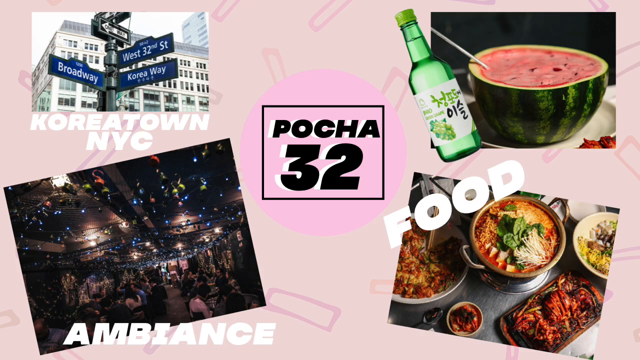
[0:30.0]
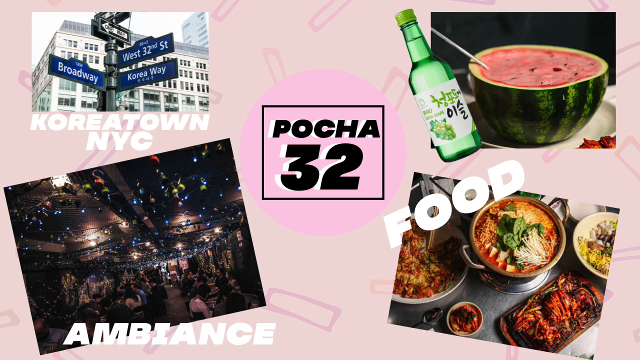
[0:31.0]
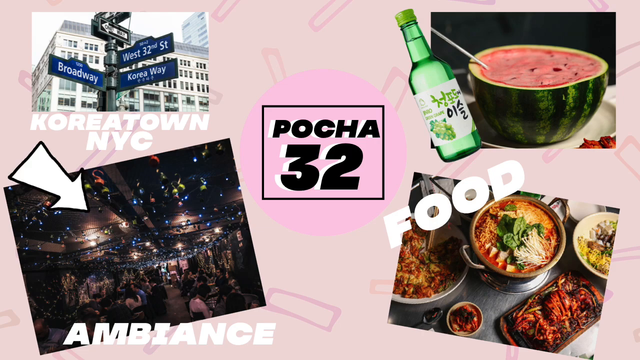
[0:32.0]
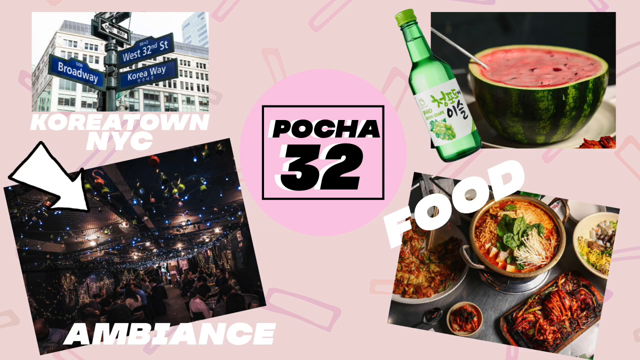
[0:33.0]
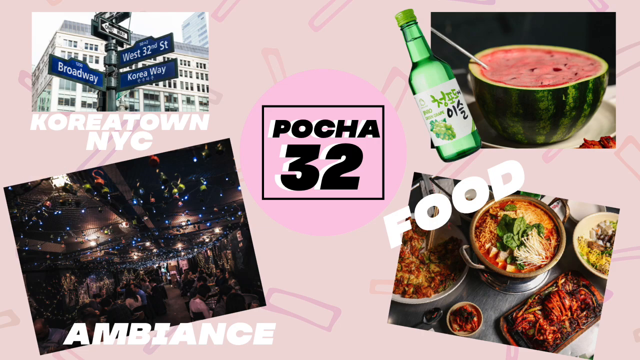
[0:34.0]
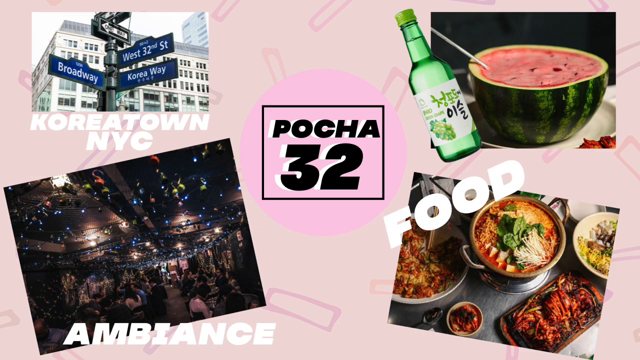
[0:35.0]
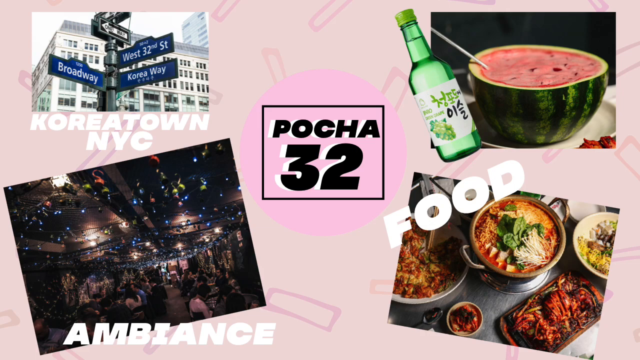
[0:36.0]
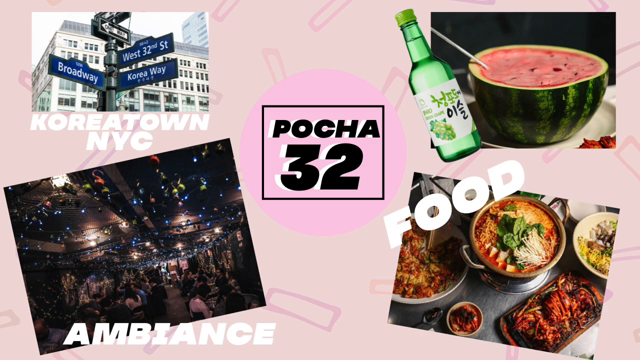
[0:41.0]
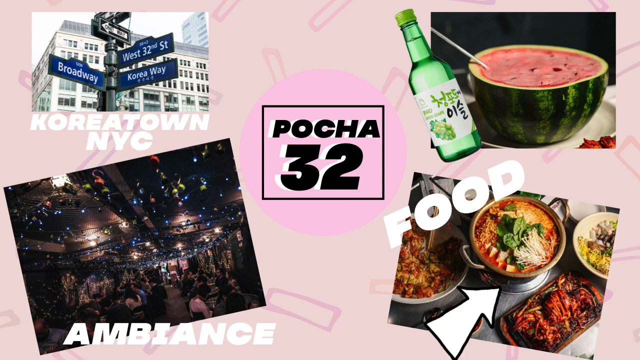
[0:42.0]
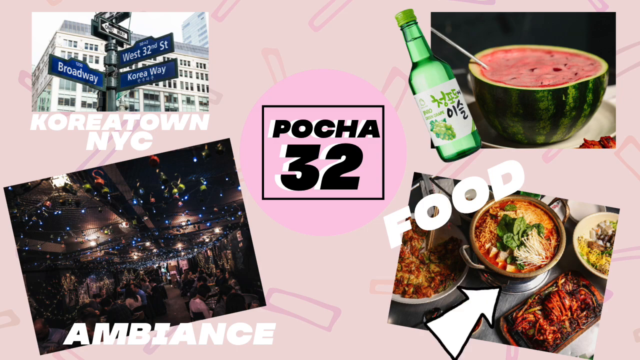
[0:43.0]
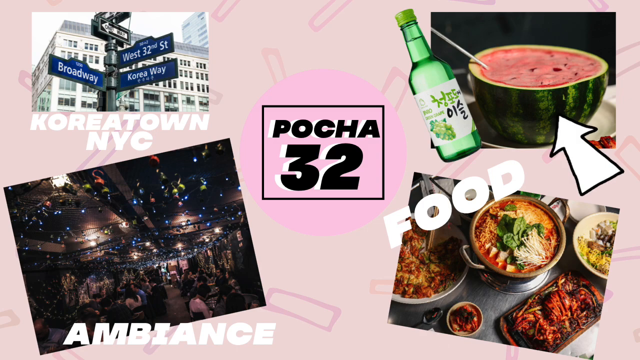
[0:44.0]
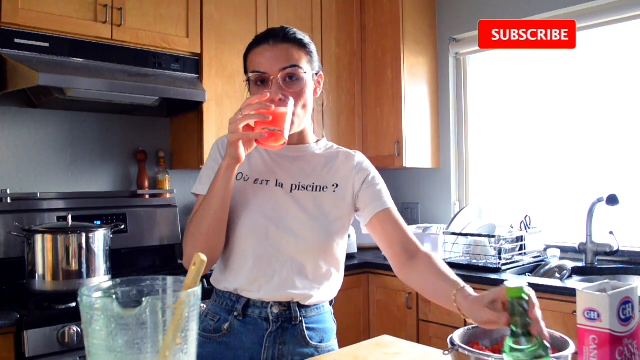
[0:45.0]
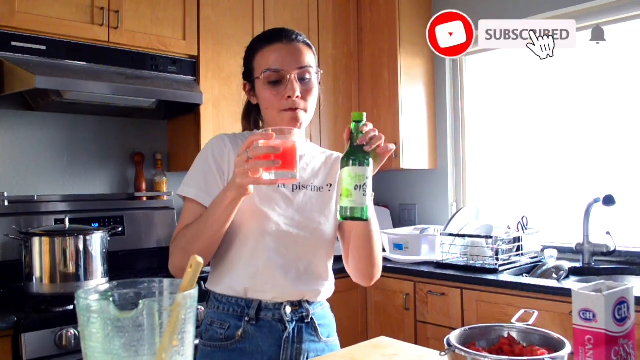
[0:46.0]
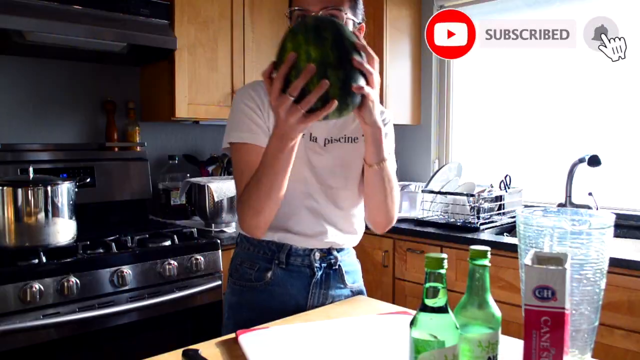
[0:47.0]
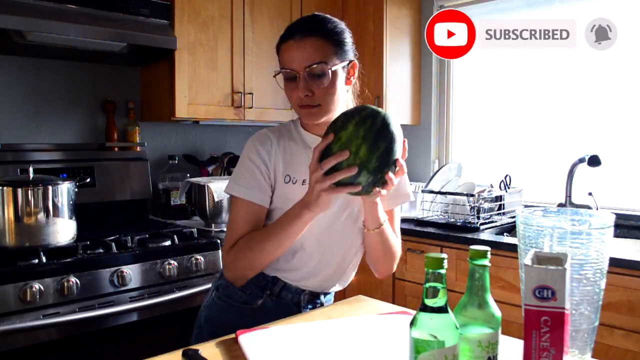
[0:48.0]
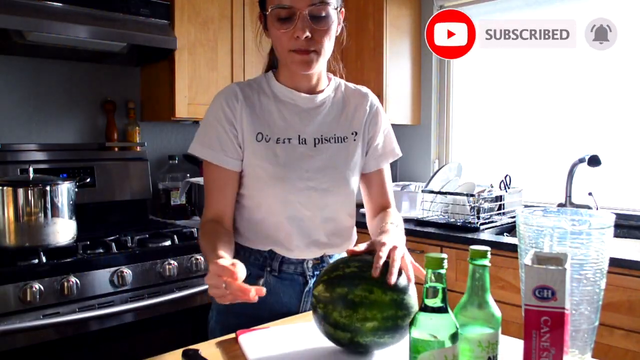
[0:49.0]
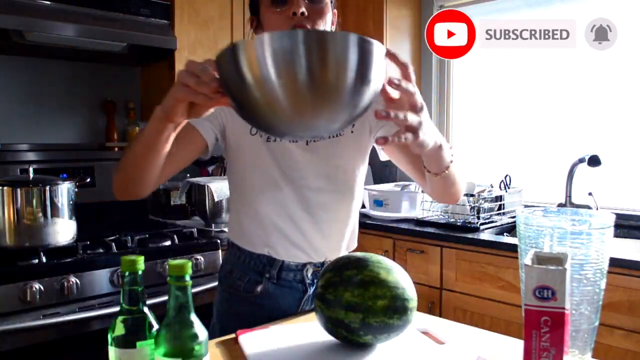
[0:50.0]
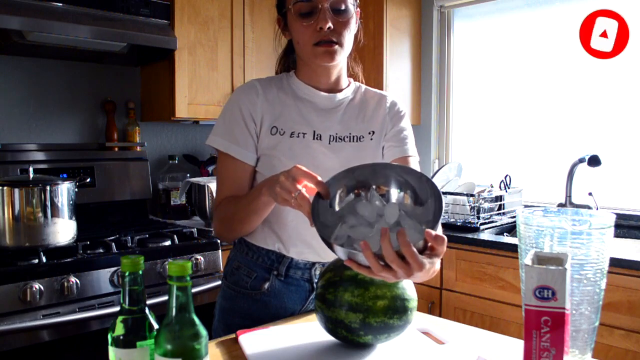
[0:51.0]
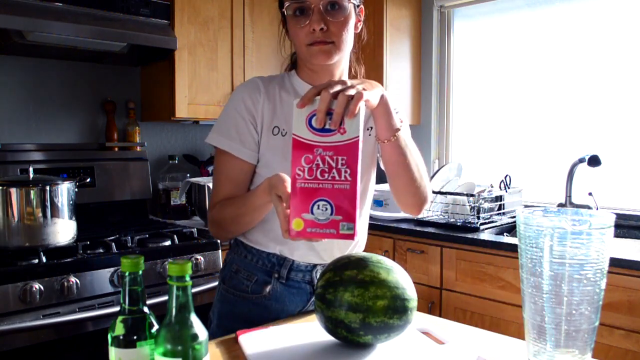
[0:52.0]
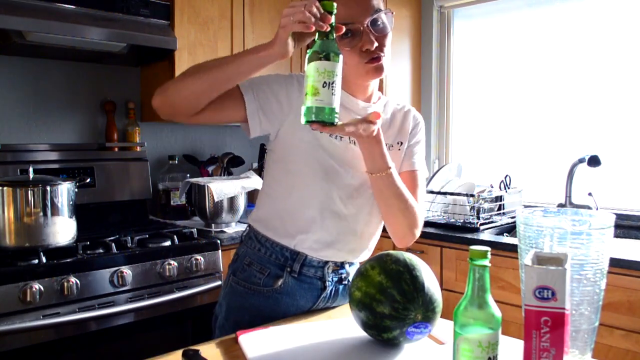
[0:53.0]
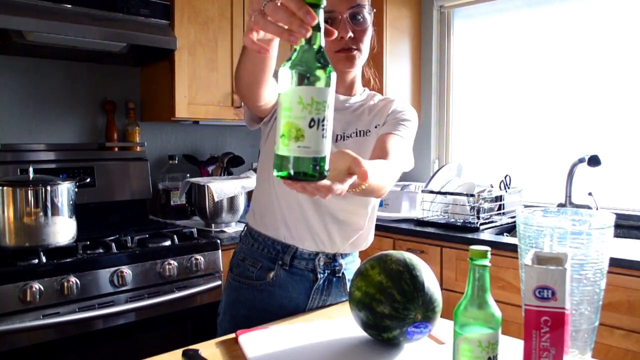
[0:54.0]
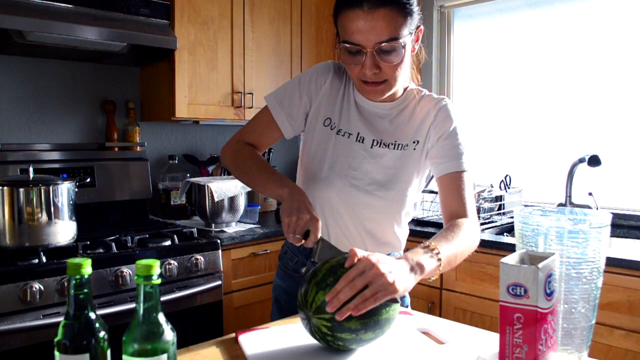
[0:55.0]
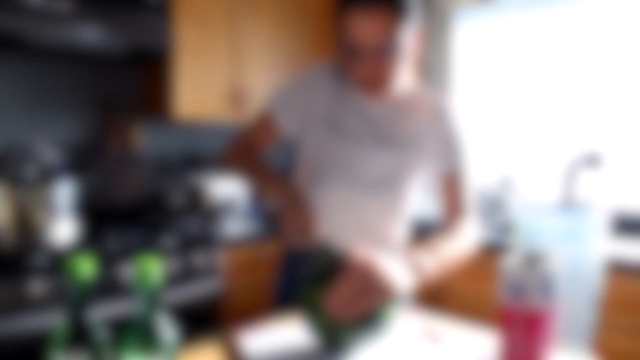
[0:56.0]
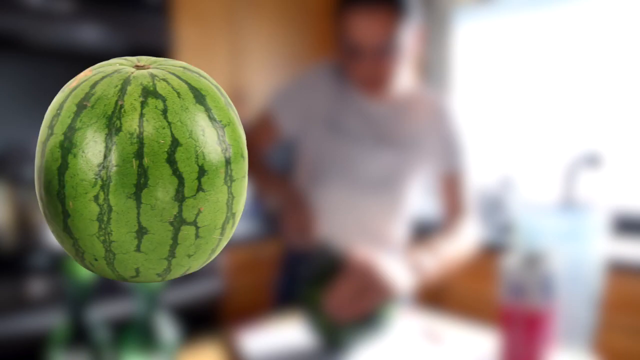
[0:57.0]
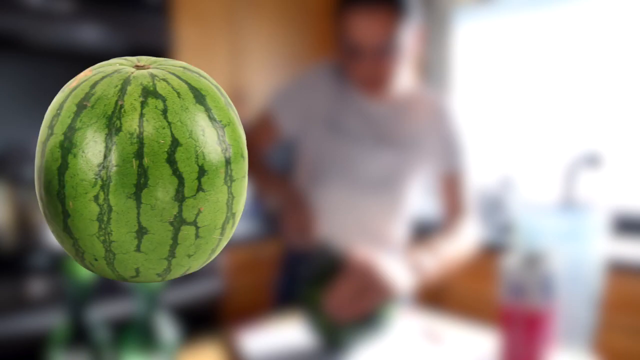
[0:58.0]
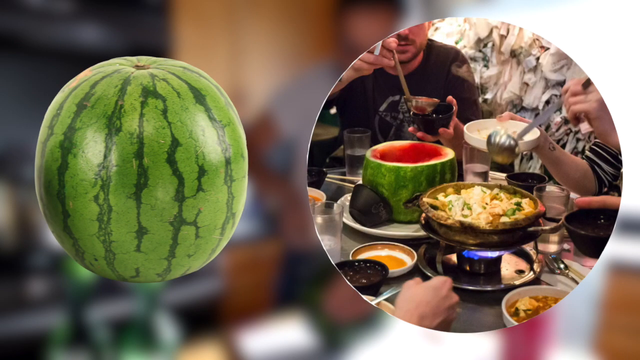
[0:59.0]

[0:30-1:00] Four images are on the right-hand side of the screen, including a watermelon cut in half that appears to have liquid in it, and below that an image of some food dishes. On the upper left, text reads "Koreatown"; above that is an image of some street signs on a street corner, and below it a scene of nightlife. In the center, "Pocha 32" appears in black letters. The scene shifts to a woman in her kitchen preparing a drink with a whole, uncut watermelon. She first drinks from a glass, then holds a bottle and dances with the watermelon. She takes a bowl, some cane sugar and a bottle, and begins to cut the watermelon. The video then returns to the original screen, showing people drinking and enjoying the beverage.